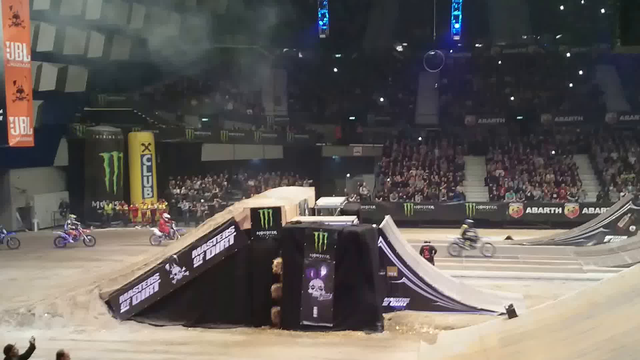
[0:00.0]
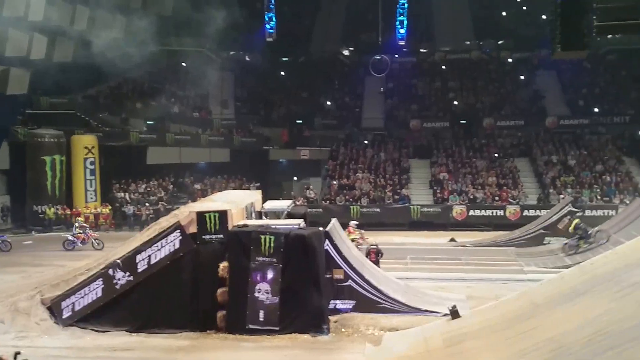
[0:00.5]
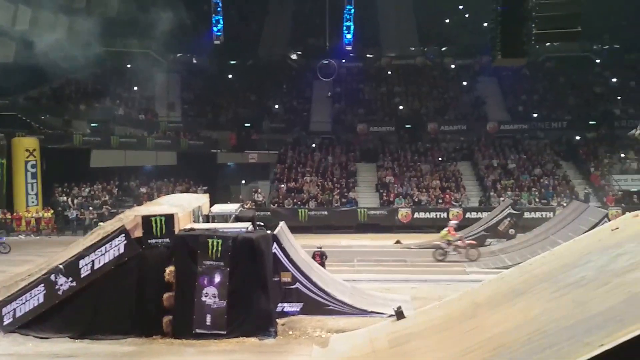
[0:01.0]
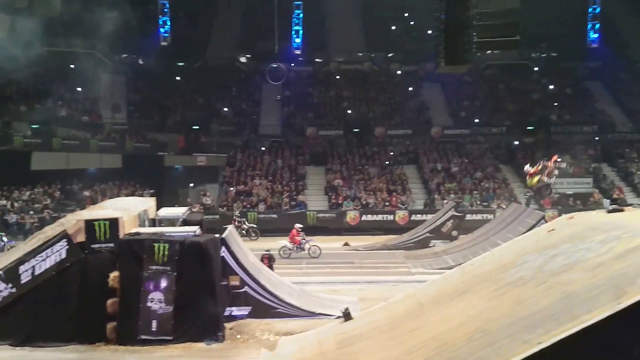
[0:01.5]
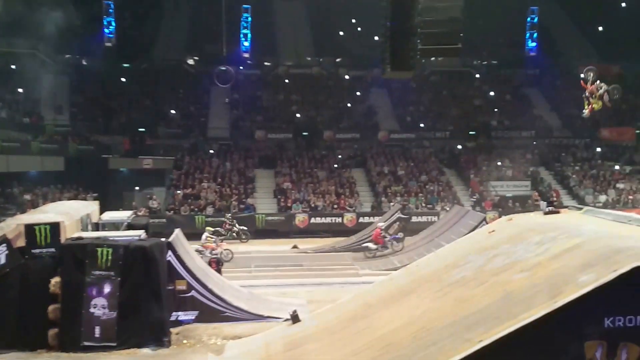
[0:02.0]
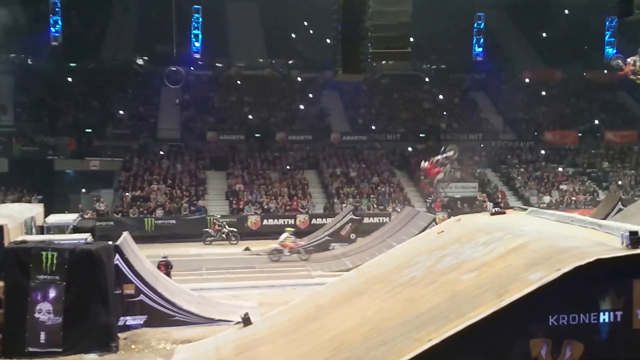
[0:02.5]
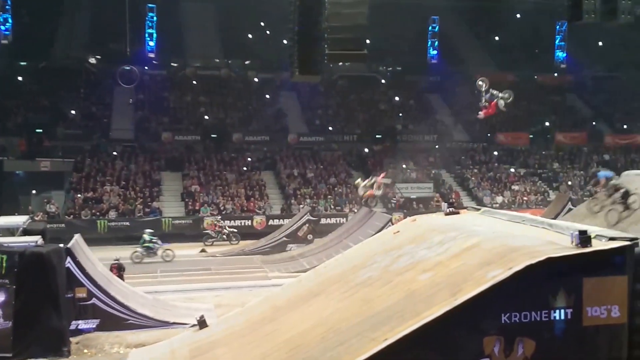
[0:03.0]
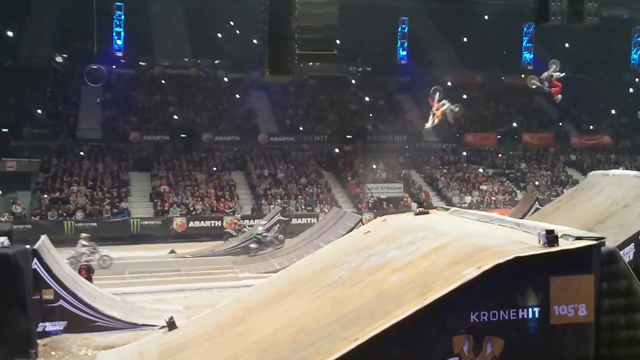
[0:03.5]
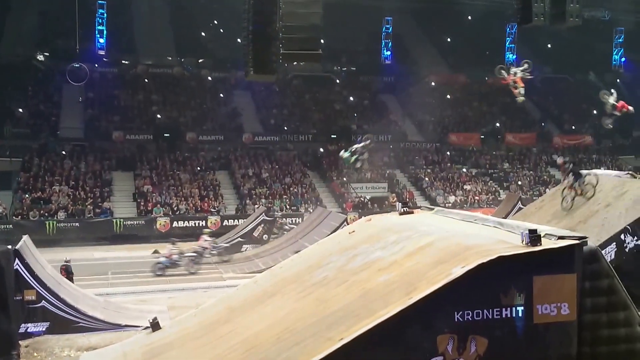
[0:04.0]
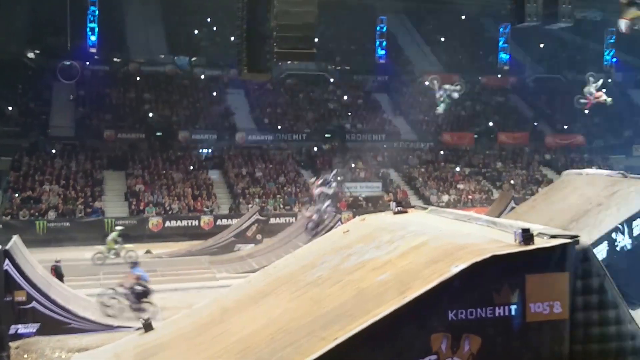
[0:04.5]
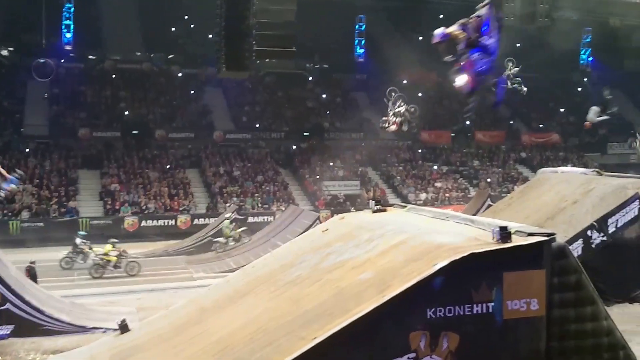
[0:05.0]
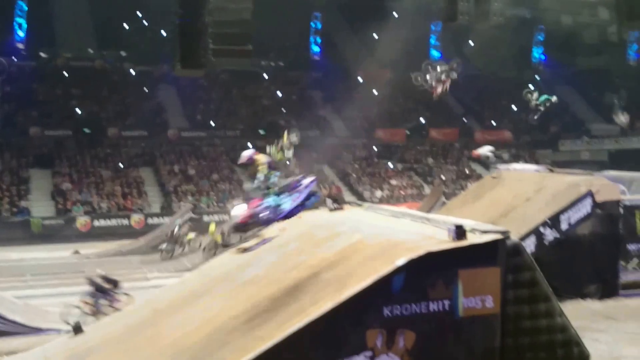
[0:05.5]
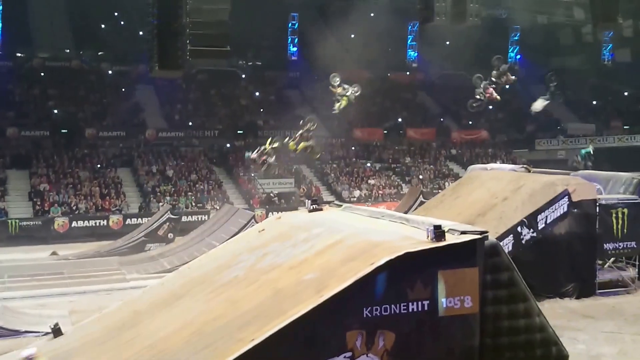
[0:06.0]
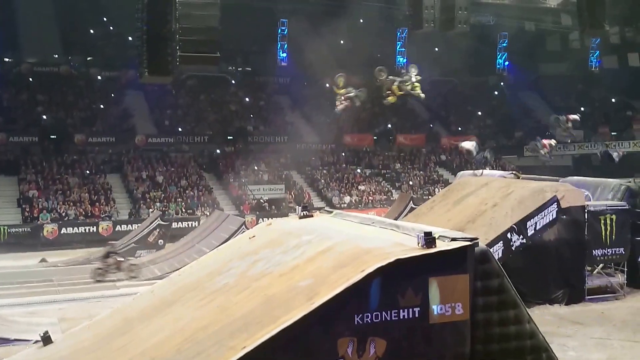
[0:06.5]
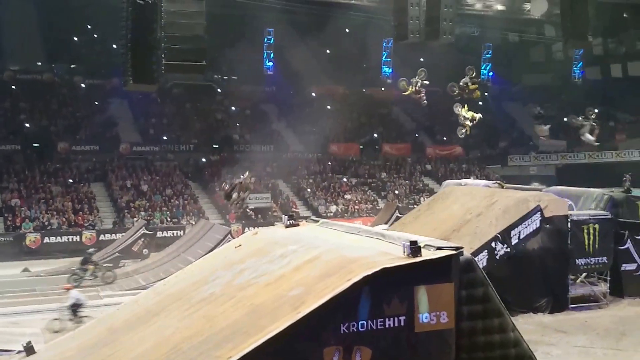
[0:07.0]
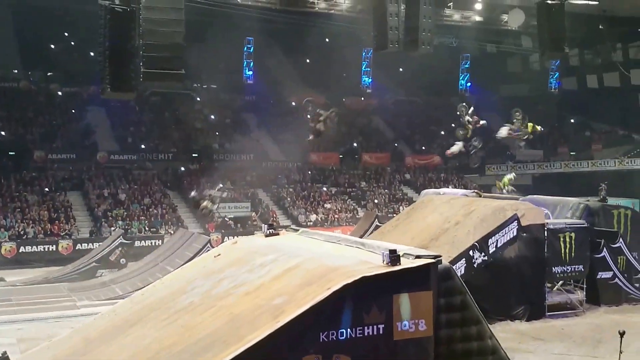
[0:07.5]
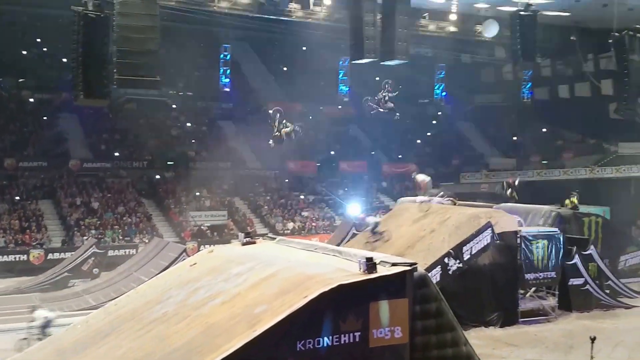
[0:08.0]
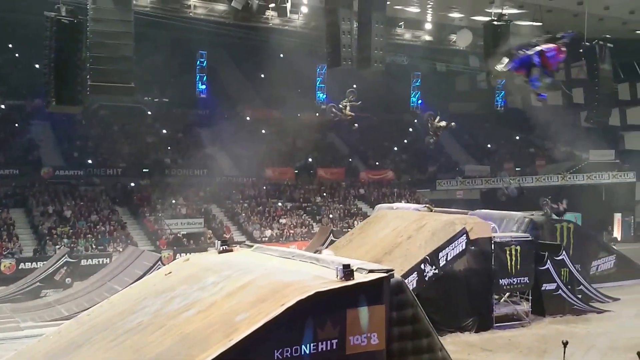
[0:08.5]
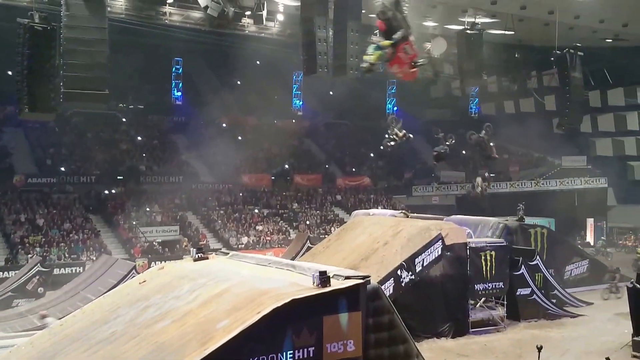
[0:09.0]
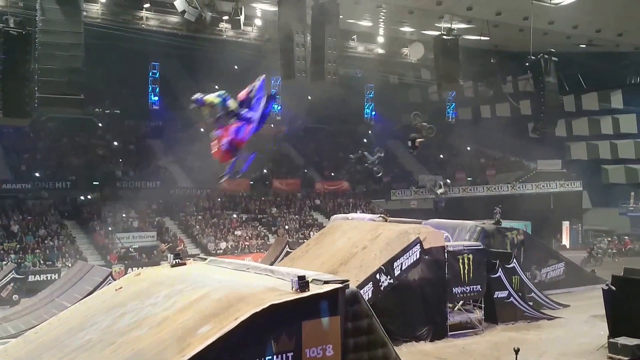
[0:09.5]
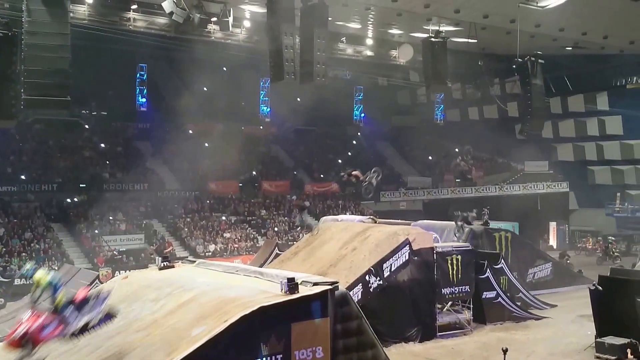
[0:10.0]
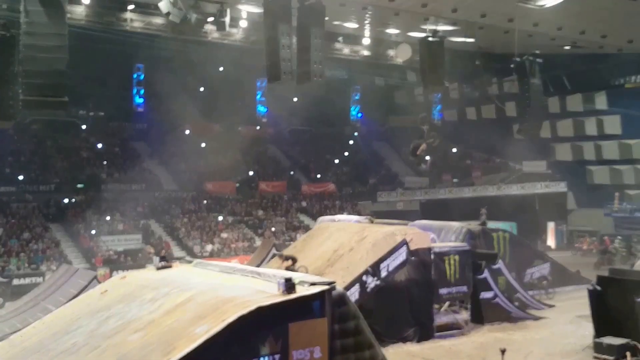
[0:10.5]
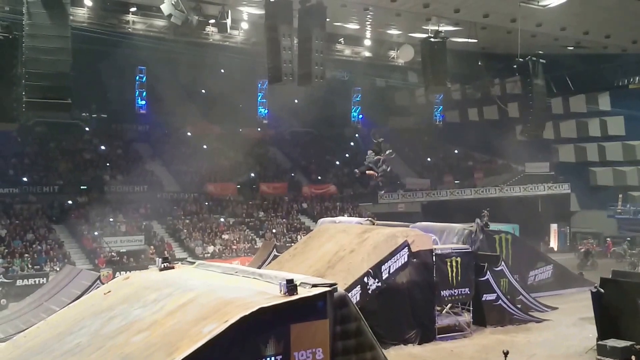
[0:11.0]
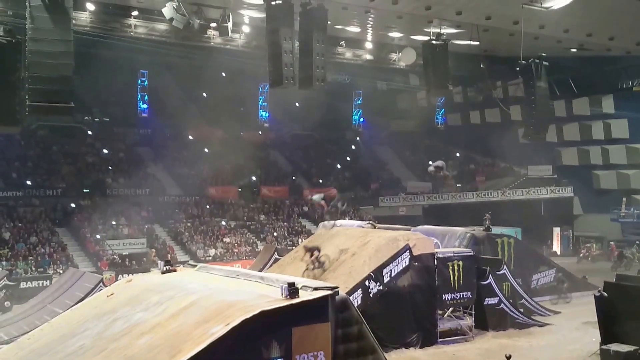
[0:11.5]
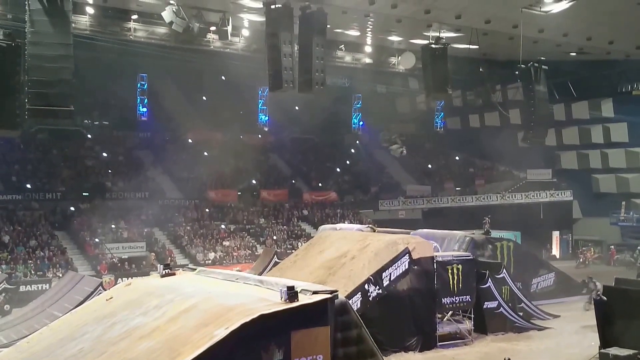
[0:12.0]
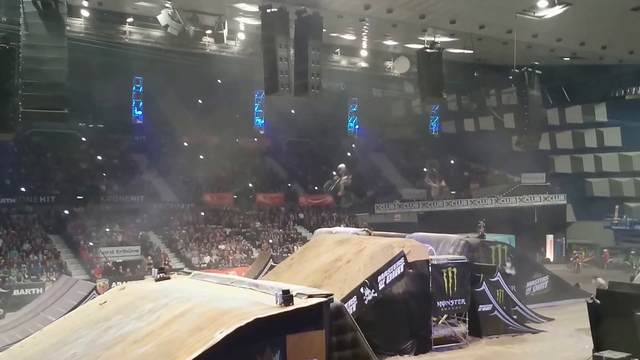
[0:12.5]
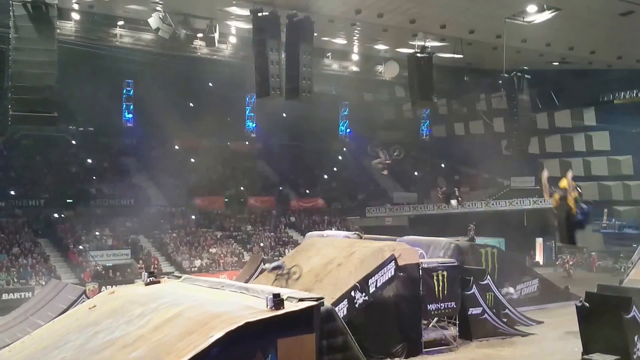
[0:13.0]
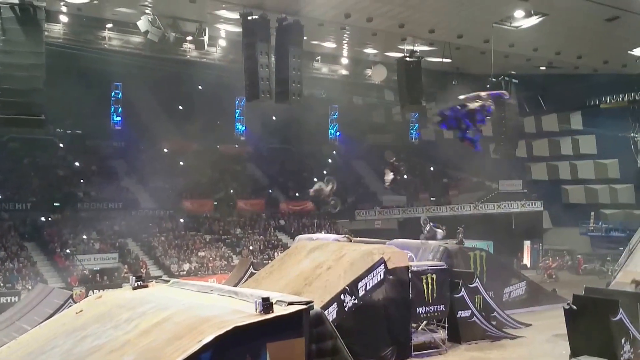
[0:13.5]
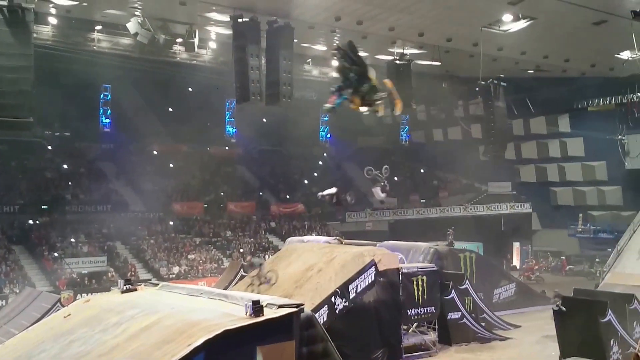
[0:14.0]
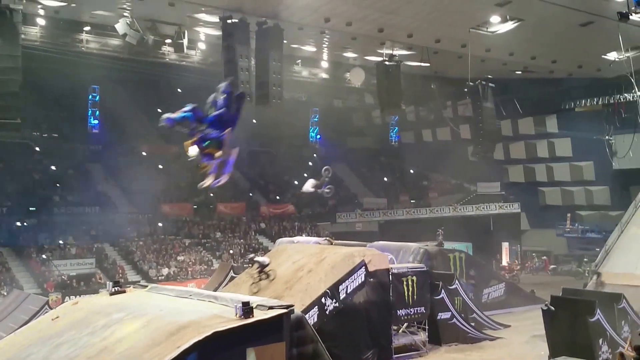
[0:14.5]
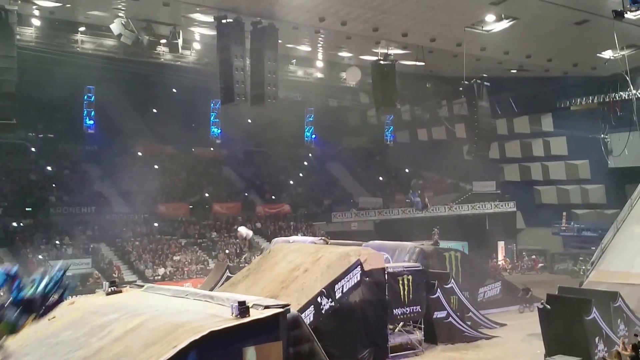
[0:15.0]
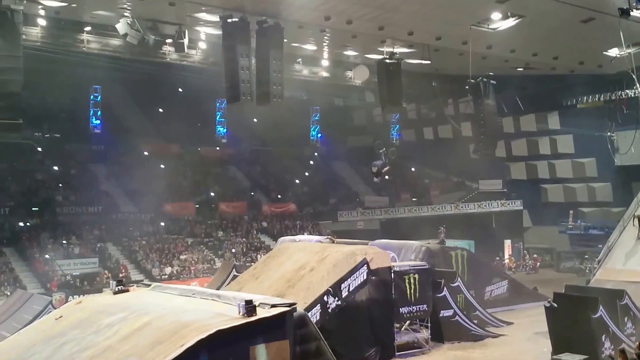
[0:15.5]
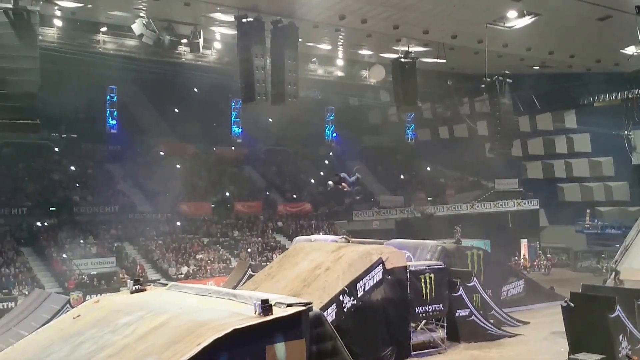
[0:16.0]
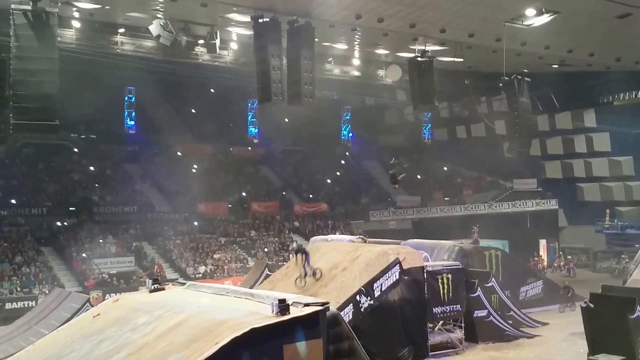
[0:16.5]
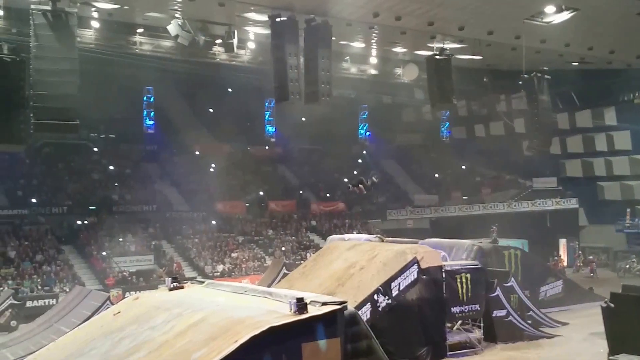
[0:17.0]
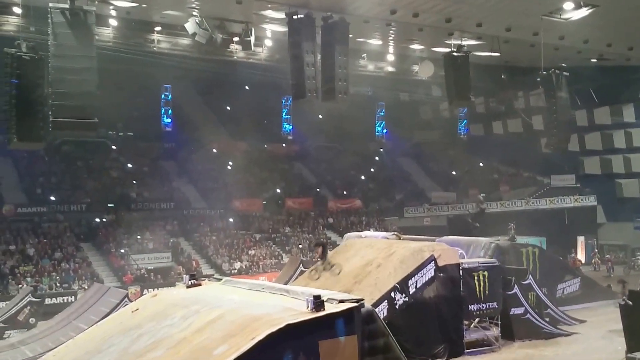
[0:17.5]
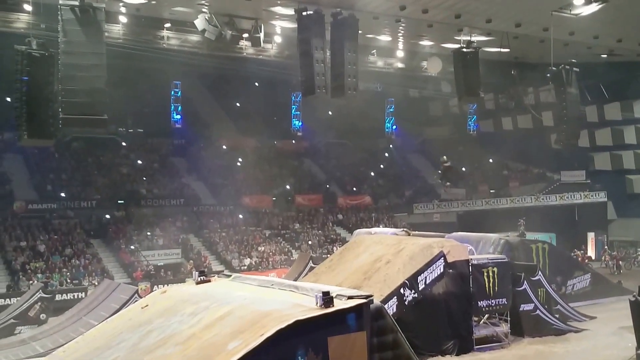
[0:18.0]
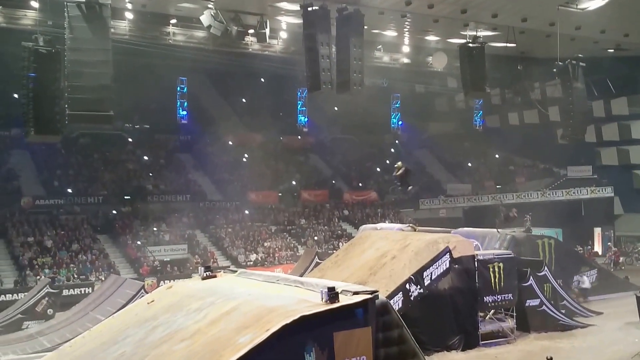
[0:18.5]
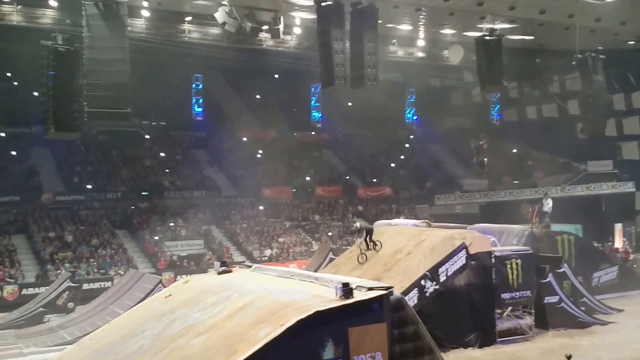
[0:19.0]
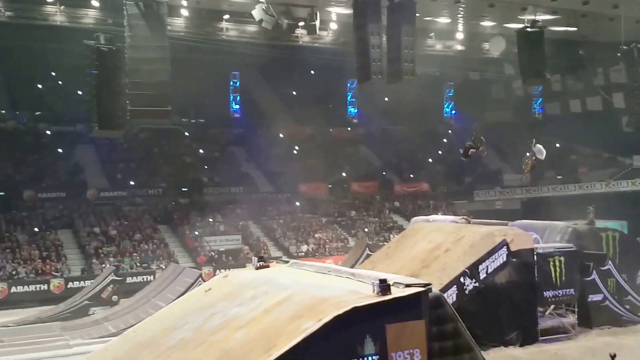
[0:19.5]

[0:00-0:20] An indoor bike performance takes place in an indoor arena that looks like it could be an indoor soccer or football arena. Motorcycles, dirt bikes, are driven around an inside course, doing a series of stunts and tricks for a large crowd gathered around. There are quite a few people in the stands, and ads for Monster, Club and JBL appear throughout the stadium. The bikes work in unison with each other, going over the ramps as they go. Most riders do single backflips, but at various points they do different things; one does a front flip. A snowmobile also goes across, so not all of the vehicles are dirt bikes. The crowd is mostly still. There are at least 10 ramps.